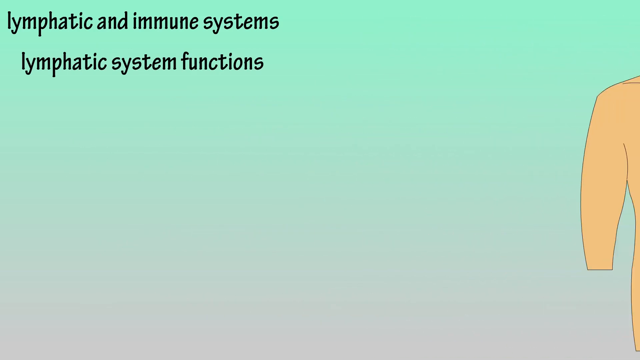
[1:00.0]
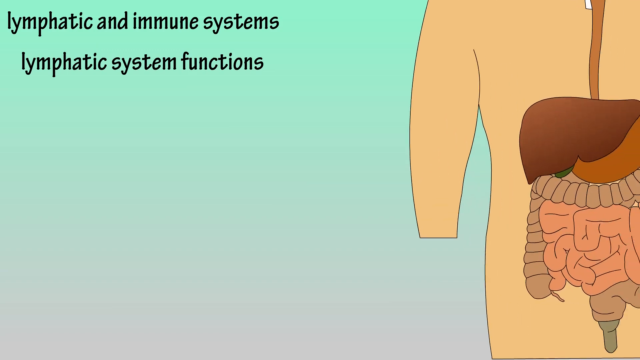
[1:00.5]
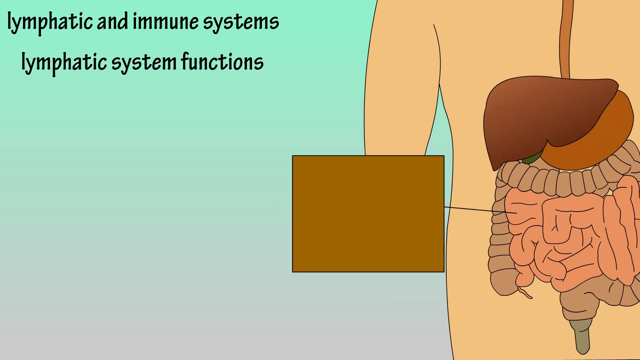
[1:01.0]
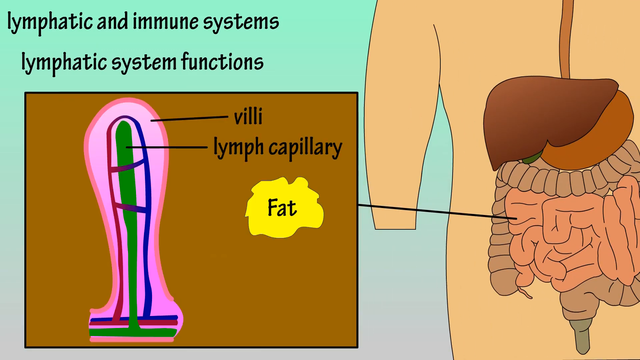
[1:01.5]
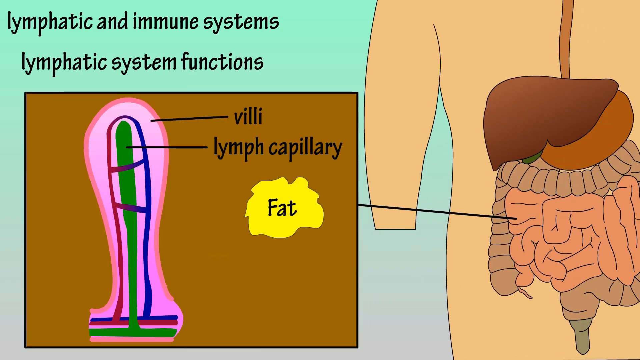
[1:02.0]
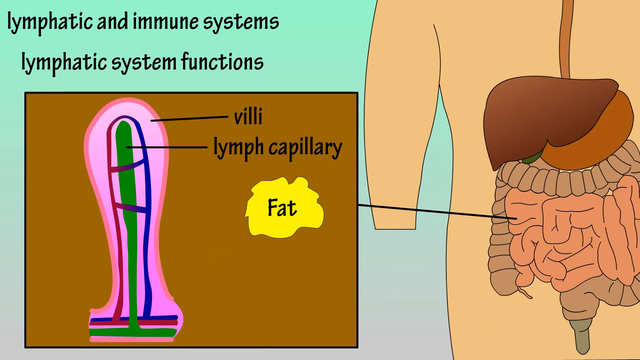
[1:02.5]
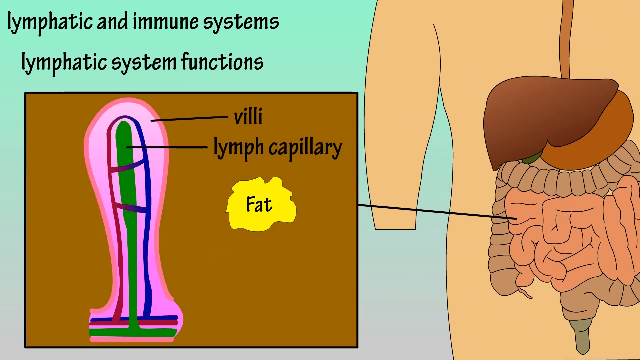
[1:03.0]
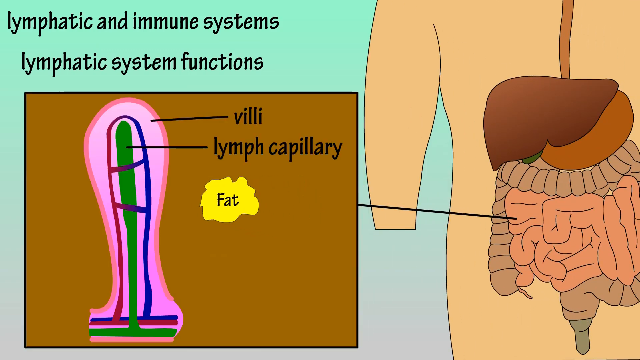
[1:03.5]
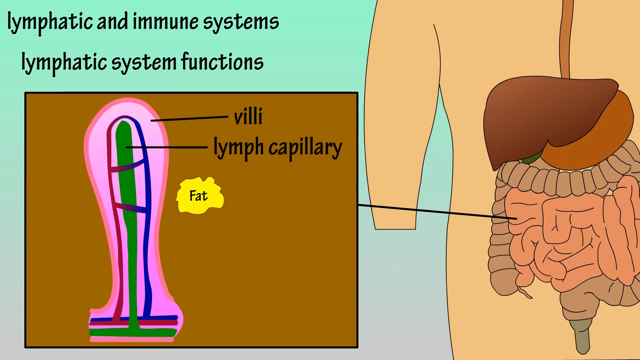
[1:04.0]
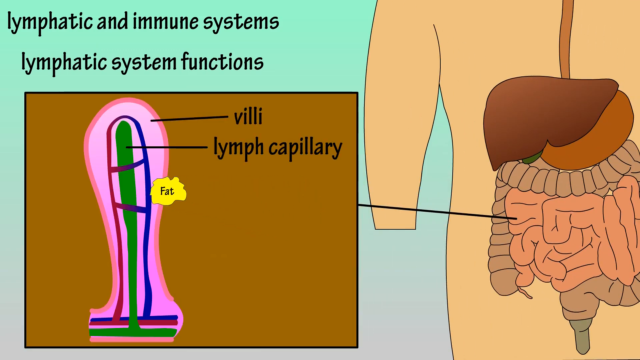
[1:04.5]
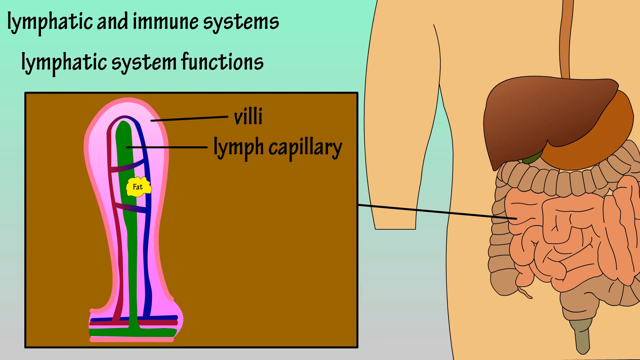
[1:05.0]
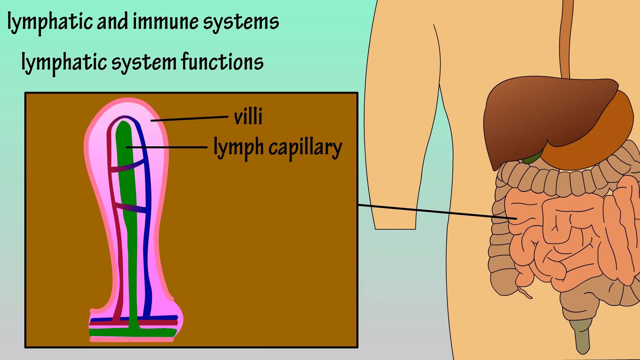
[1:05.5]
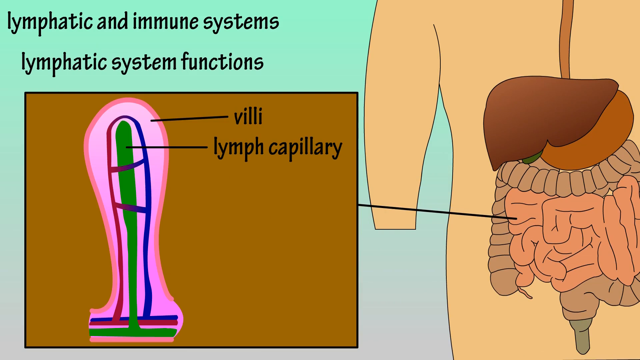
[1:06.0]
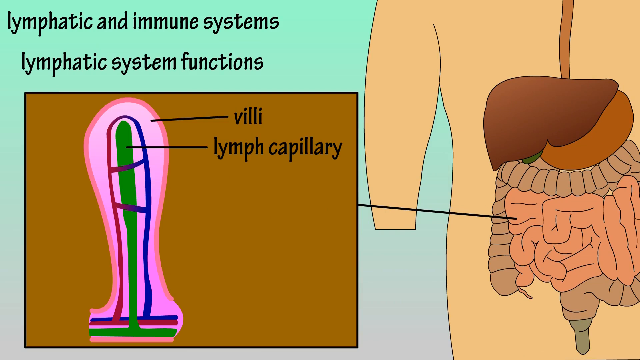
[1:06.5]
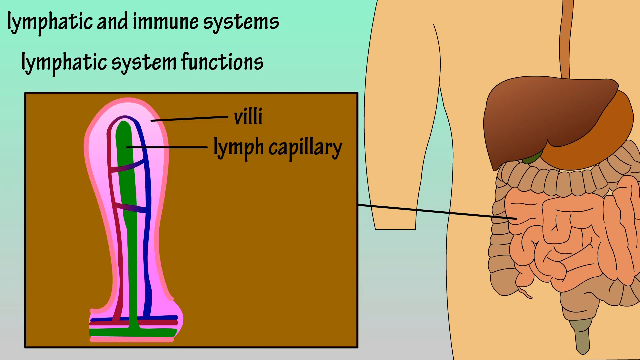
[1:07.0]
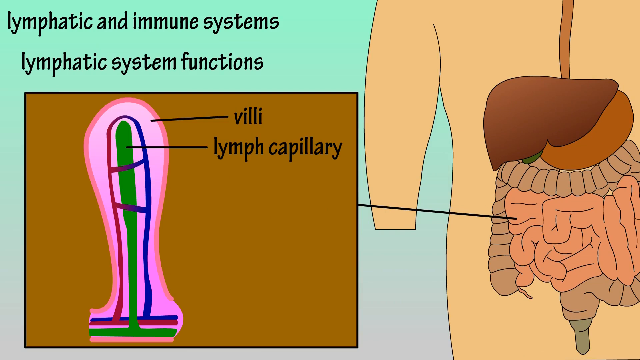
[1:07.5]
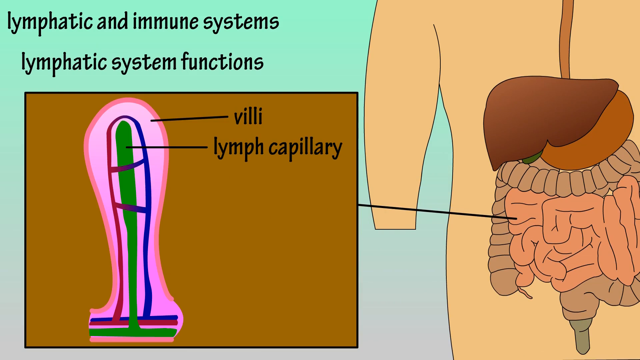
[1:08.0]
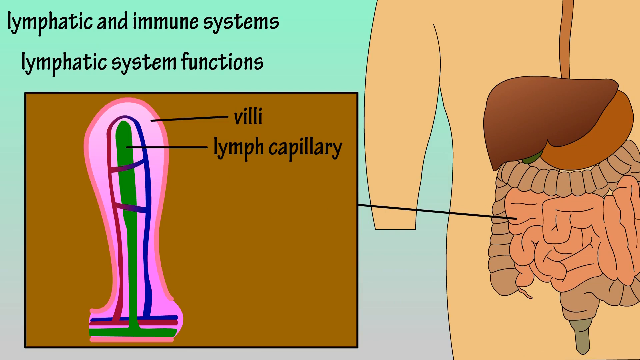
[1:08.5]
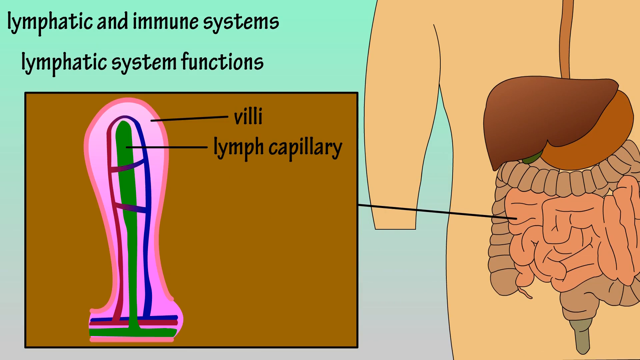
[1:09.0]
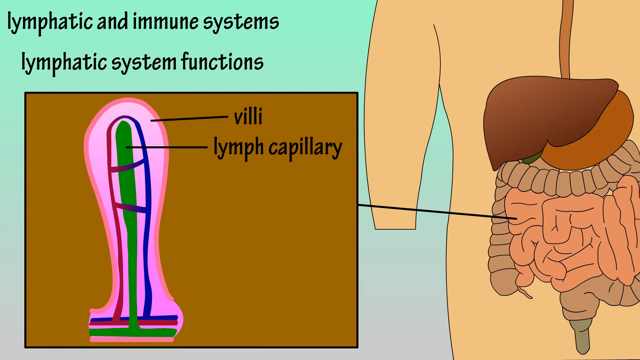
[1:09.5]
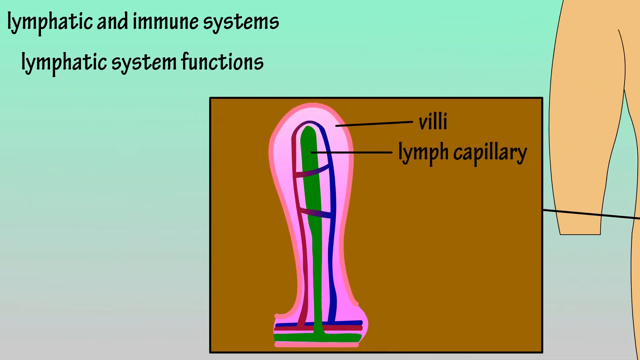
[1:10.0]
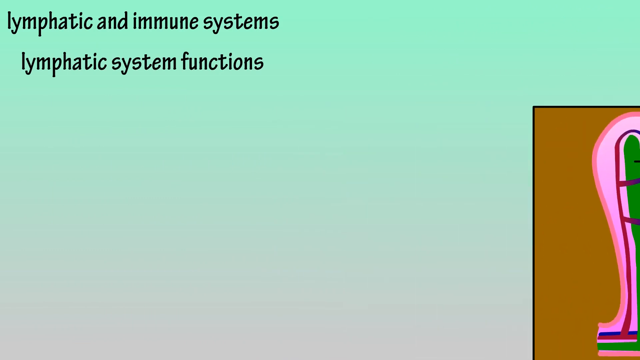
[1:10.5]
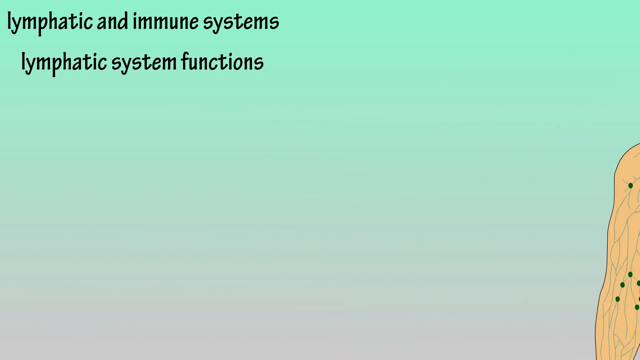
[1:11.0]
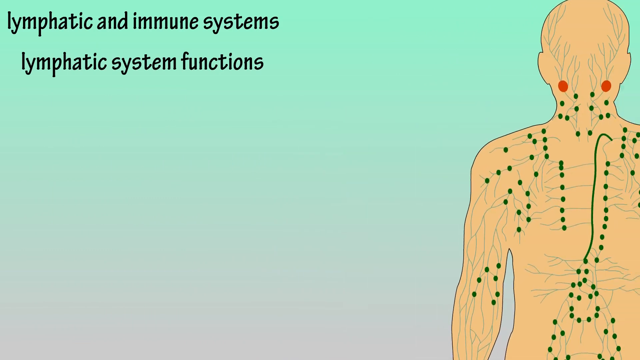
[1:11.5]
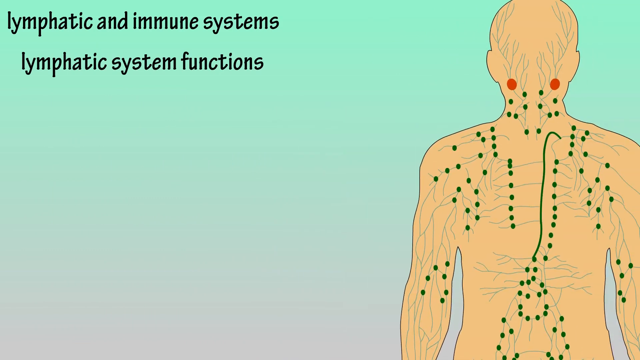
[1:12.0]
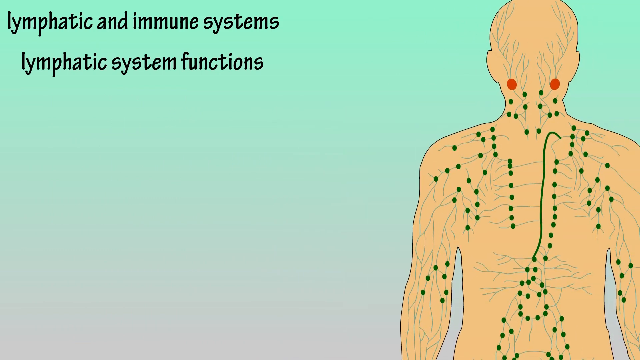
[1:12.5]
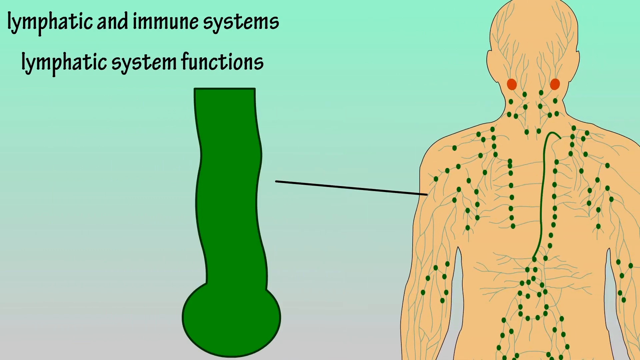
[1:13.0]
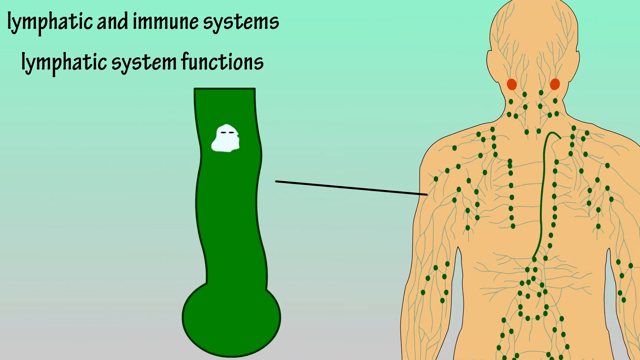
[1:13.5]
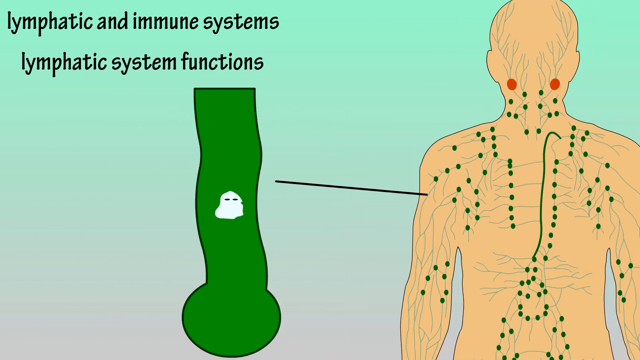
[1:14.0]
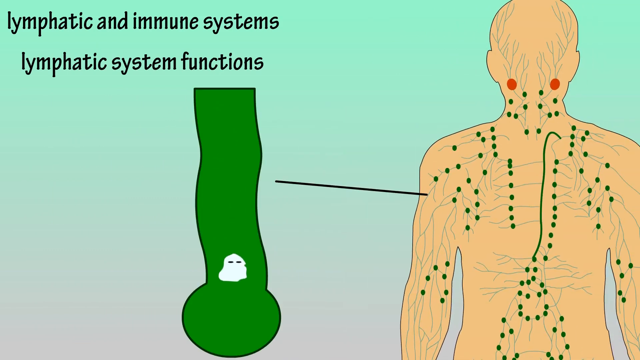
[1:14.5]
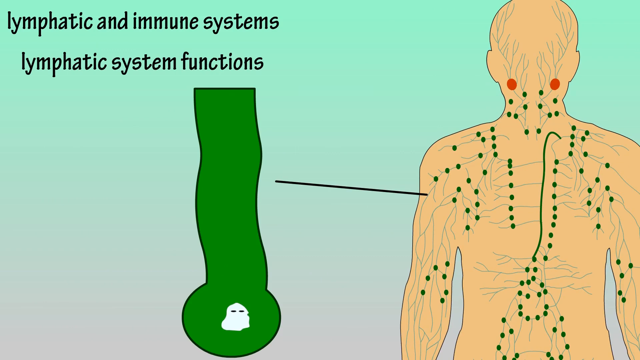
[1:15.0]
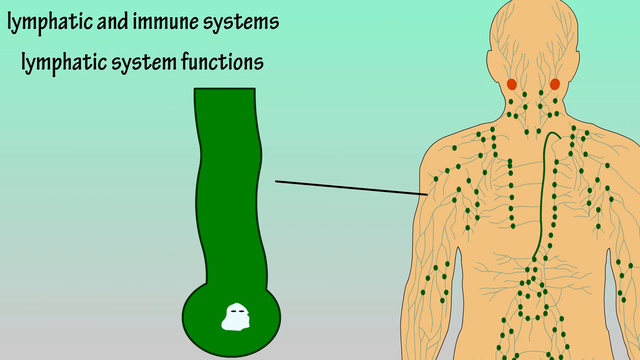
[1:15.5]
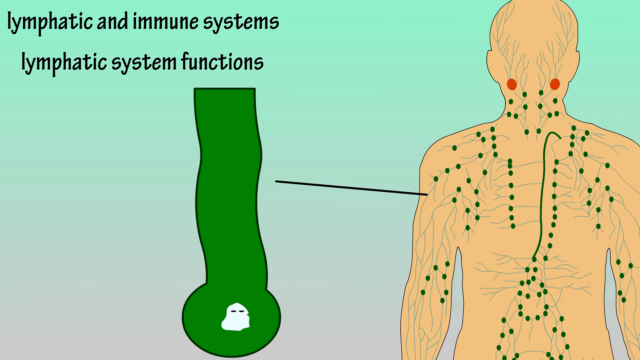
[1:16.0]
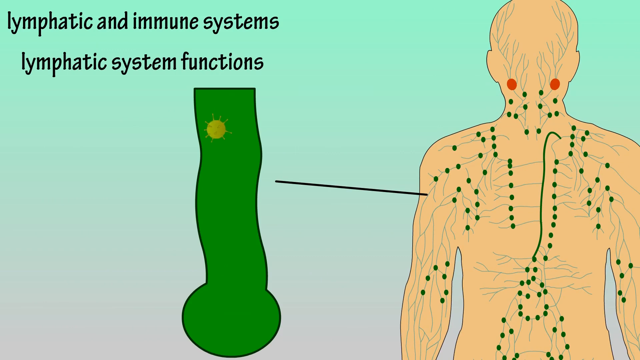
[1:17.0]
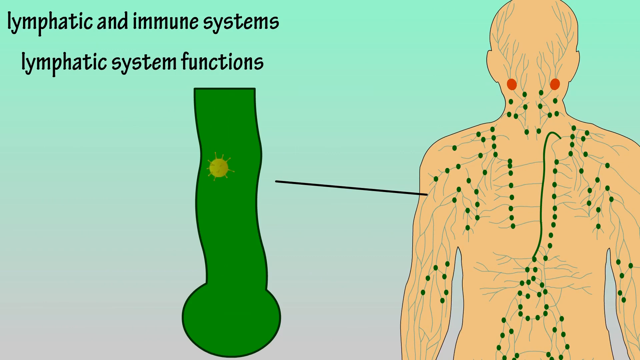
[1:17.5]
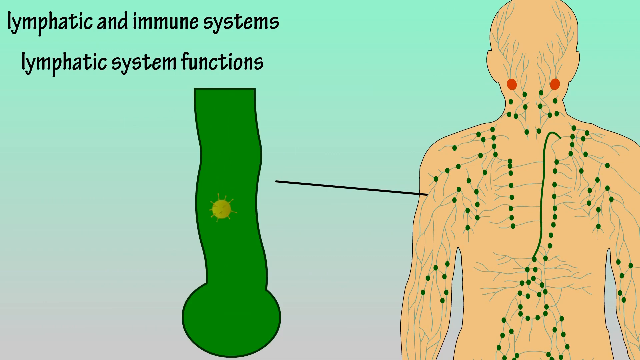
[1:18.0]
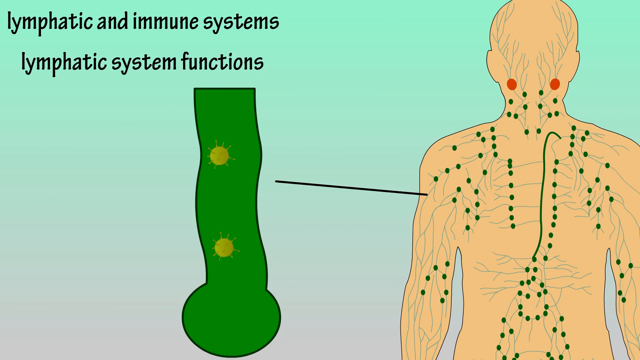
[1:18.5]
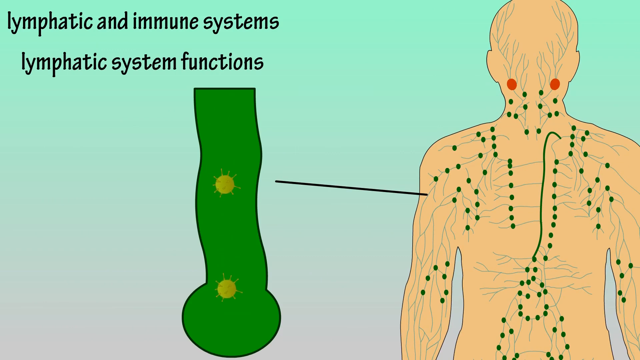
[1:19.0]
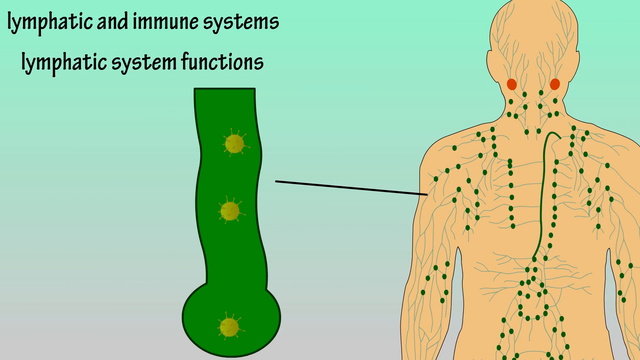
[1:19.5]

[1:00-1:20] The body is shown again, with an image of some internal organs. A line is drawn from the small intestine to an image of something that looks like a finger. Around this finger is a wall called villi, and inside it is a green stick called lymph capillary. On the right side of the close-up is the text "fat" on a yellow background. The fat then goes into the lymph capillary. The whole scene disappears, and again a human is shown with lymph fluid, lymph nodes, lymph vessels and the other parts. An animation shows white blood cells going through the lymph vessels and stopping at the end, and then some kind of bacteria, two and then three, going through as well.